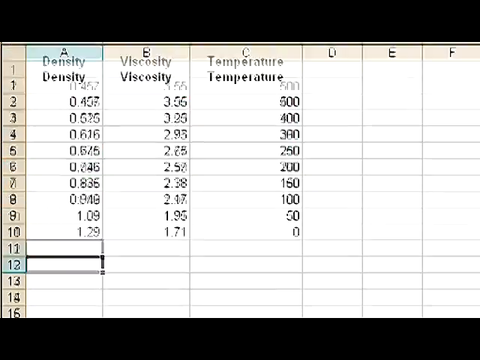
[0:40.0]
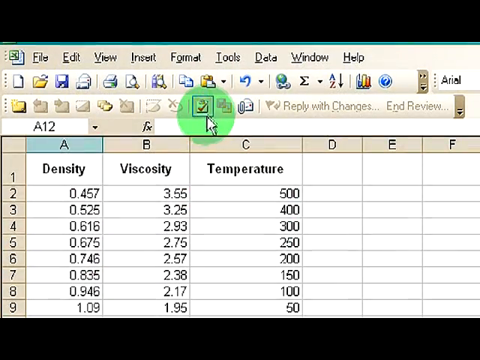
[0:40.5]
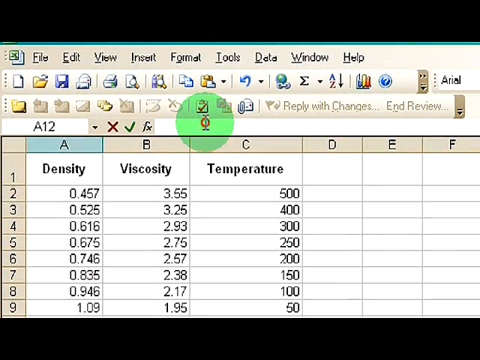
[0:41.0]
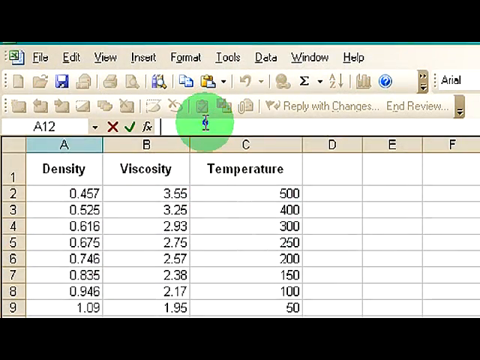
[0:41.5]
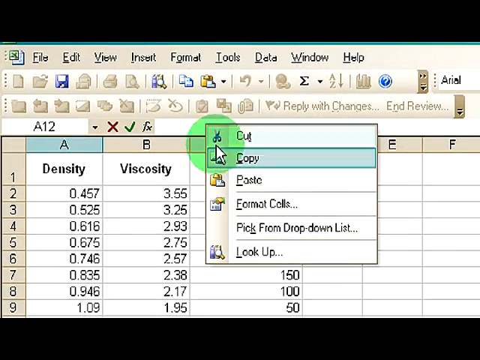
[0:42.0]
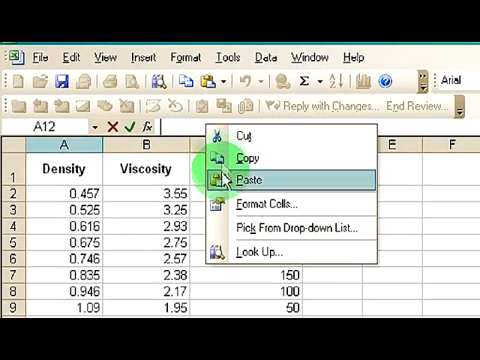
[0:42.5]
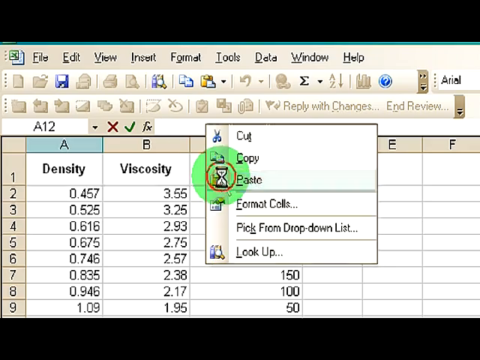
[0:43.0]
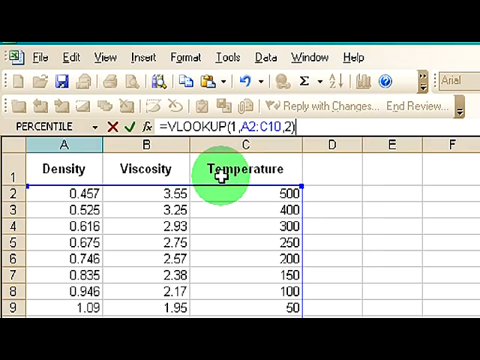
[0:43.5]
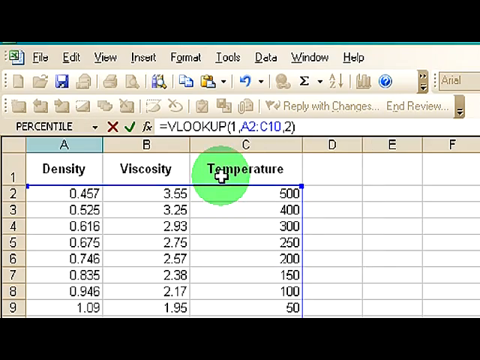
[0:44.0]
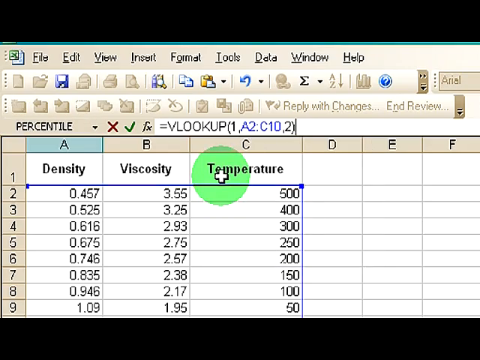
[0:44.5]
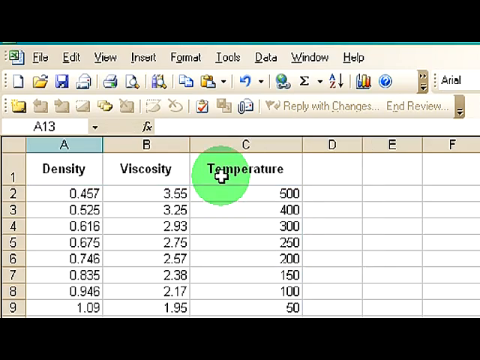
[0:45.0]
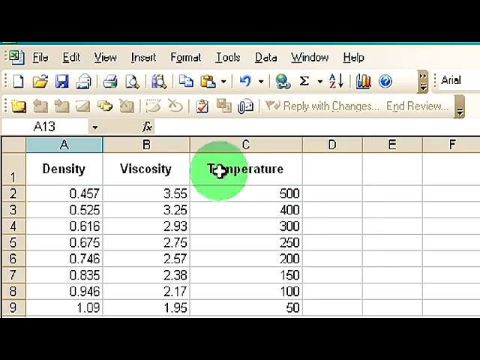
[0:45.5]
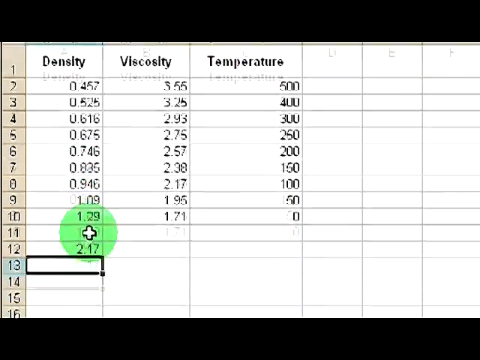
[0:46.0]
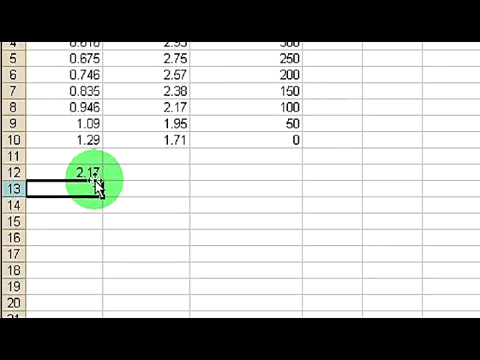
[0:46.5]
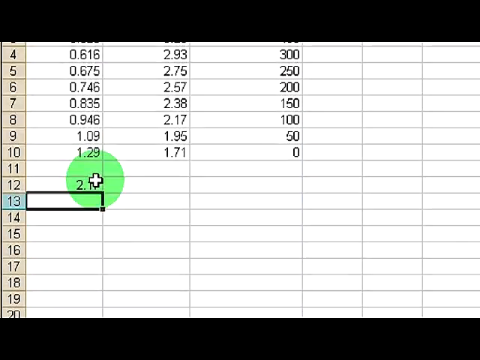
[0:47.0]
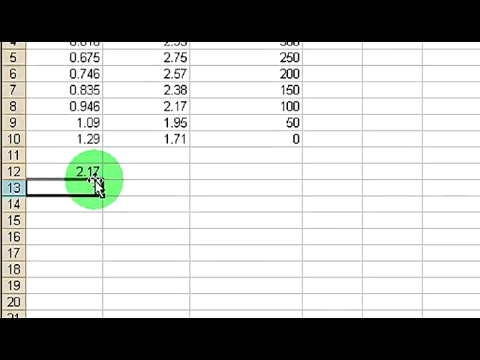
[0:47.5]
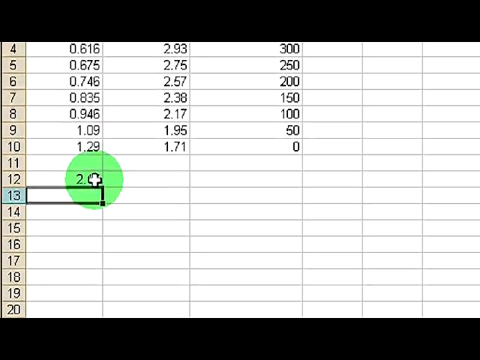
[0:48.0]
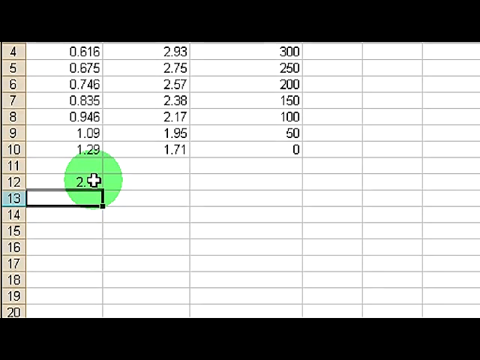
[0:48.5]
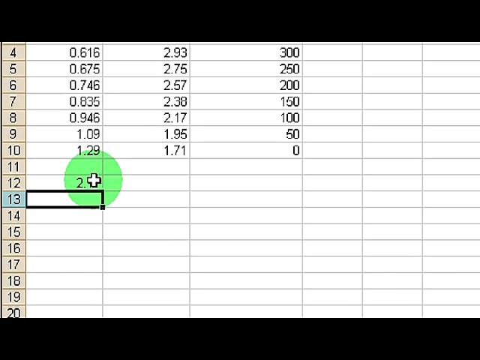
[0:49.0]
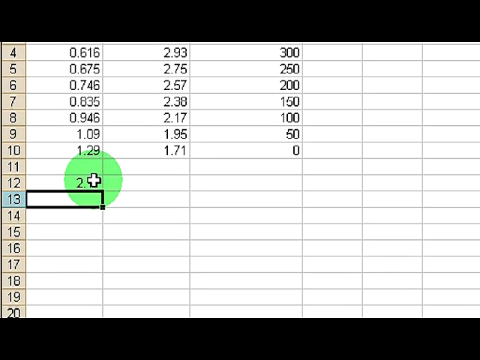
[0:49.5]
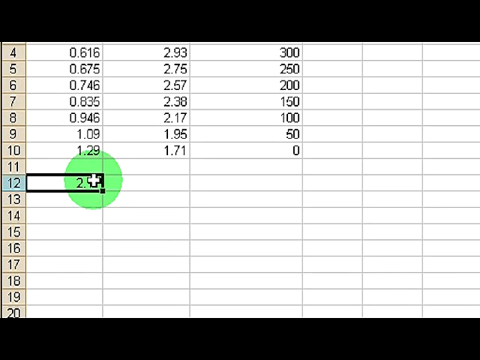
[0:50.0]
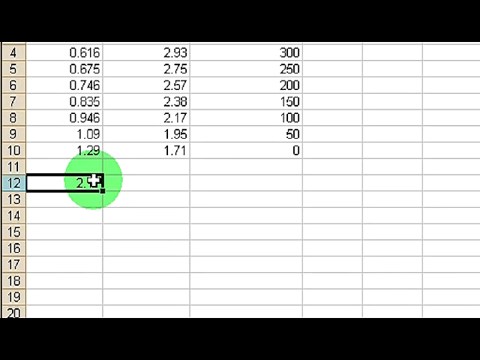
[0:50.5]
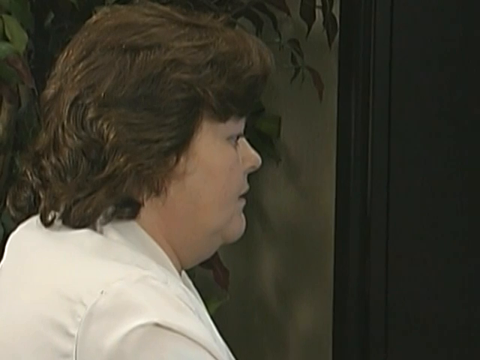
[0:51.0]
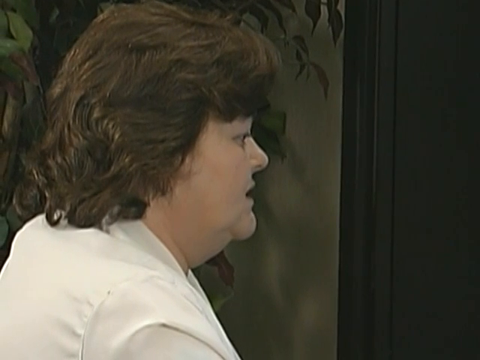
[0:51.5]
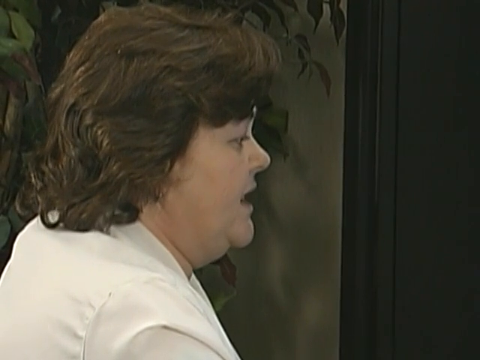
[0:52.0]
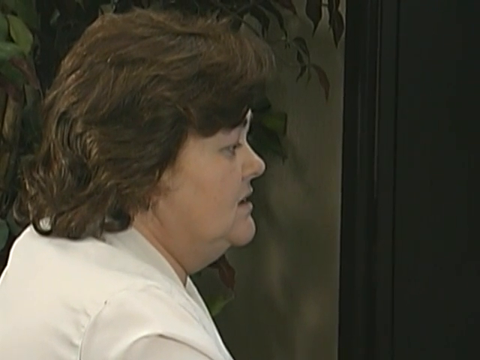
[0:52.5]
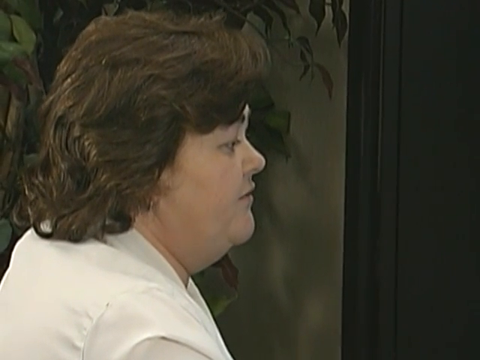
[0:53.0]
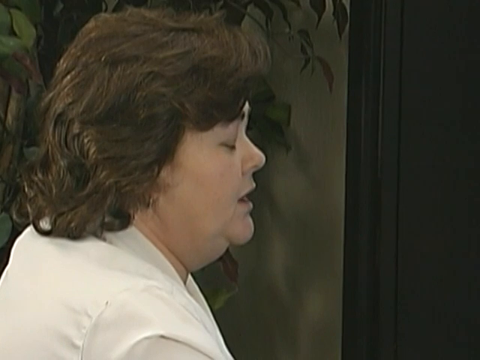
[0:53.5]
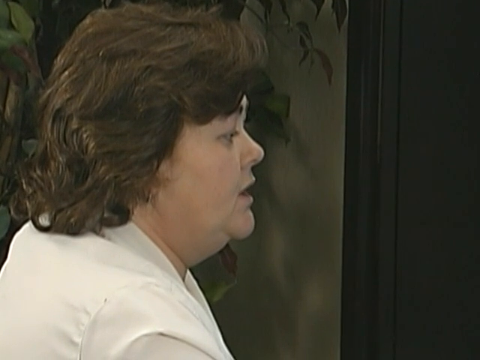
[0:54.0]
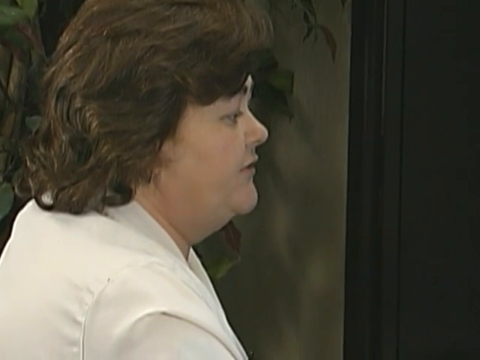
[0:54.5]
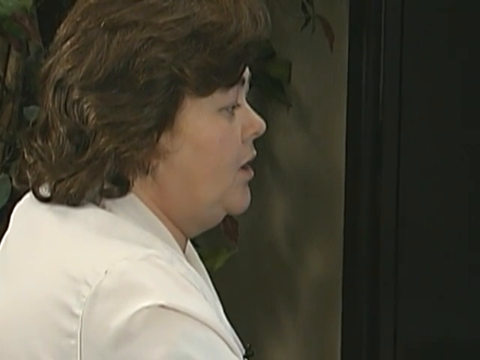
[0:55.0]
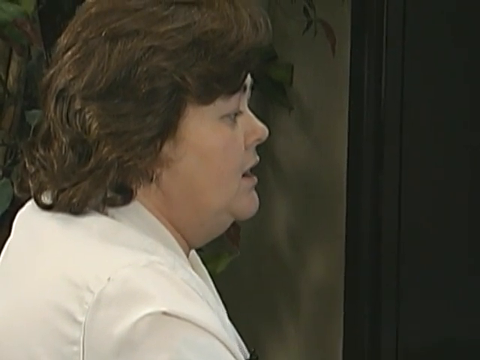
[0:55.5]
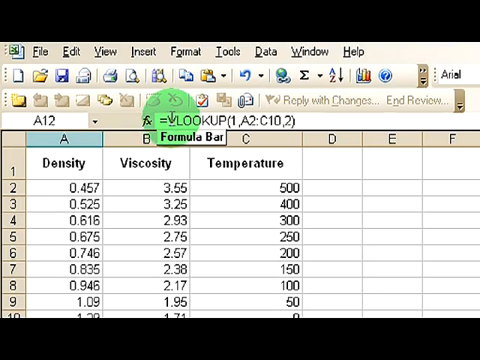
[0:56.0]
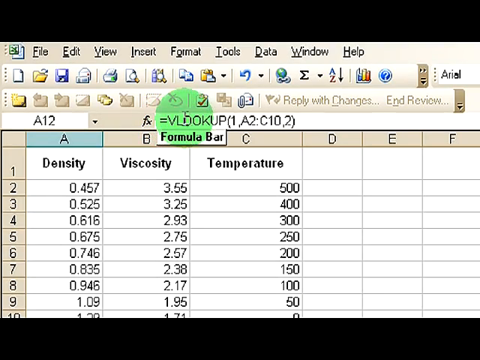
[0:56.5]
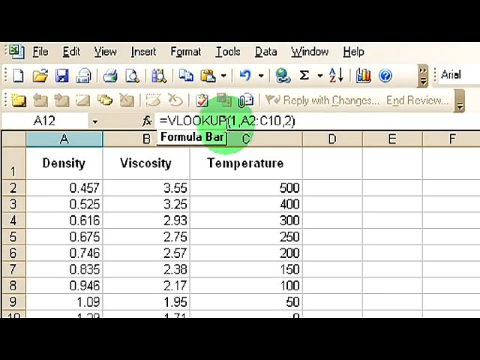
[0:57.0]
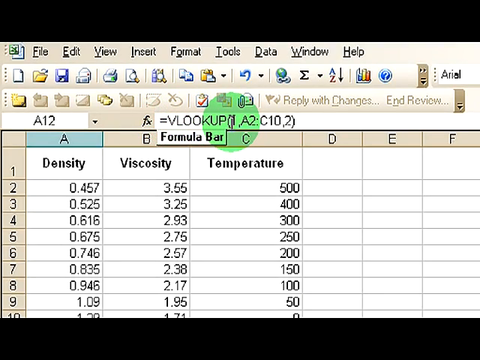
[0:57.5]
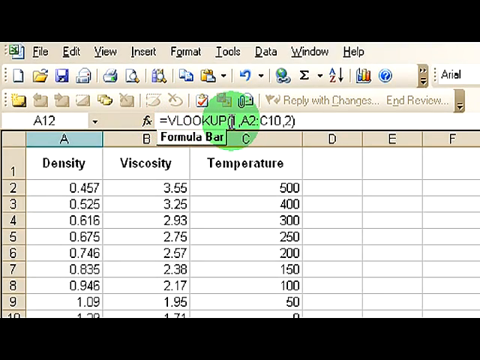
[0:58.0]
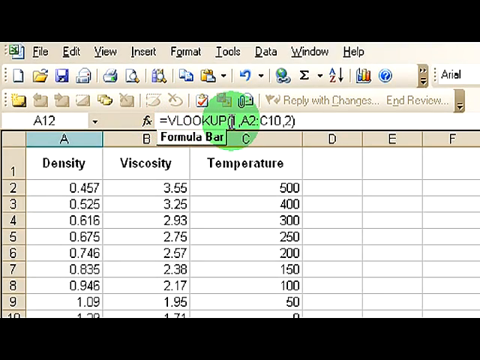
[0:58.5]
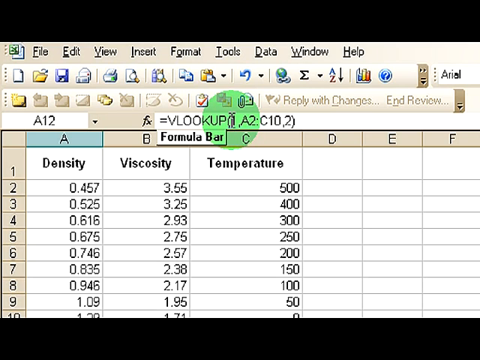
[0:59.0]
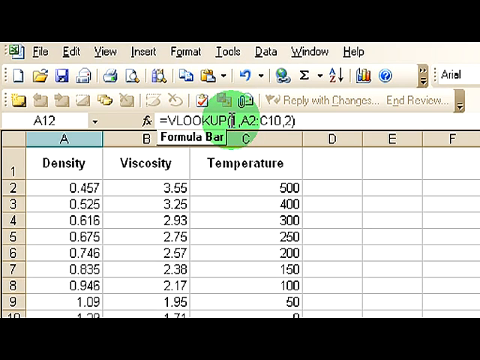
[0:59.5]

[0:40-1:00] The woman still talks about the VLOOKUP function in Excel. She copy-pastes a VLOOKUP function and moves her pointer over different cells and numbers. The Excel version is old, apparently from the early 2000s or maybe the late 1990s. The sheet has numbers in three columns across nine rows, and the last cell, apparently C10, contains a lowercase letter instead of a number. Whenever she moves her pointer, a green highlight moves with it; the highlight is a circle big enough to cover three cells. The cell dimensions are not uniform: some rows are much taller than others, and the column widths vary as well.